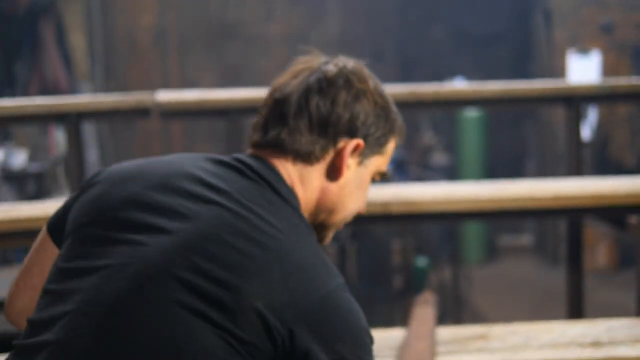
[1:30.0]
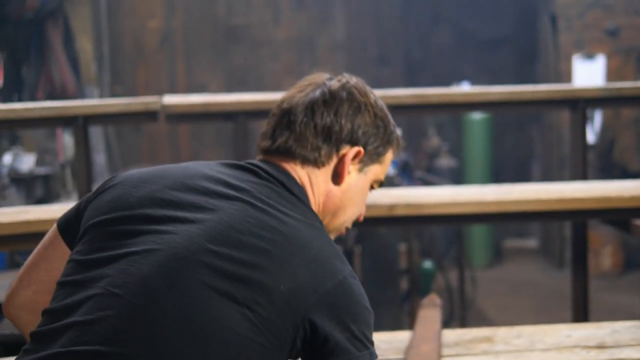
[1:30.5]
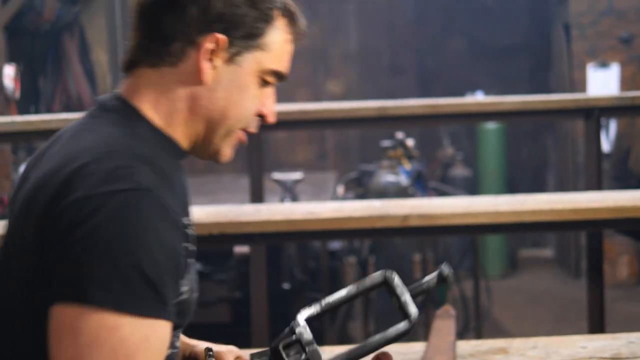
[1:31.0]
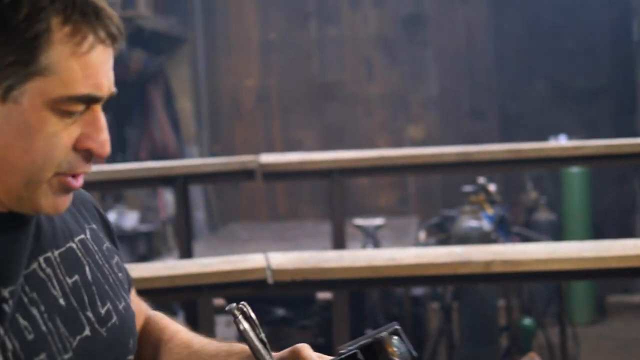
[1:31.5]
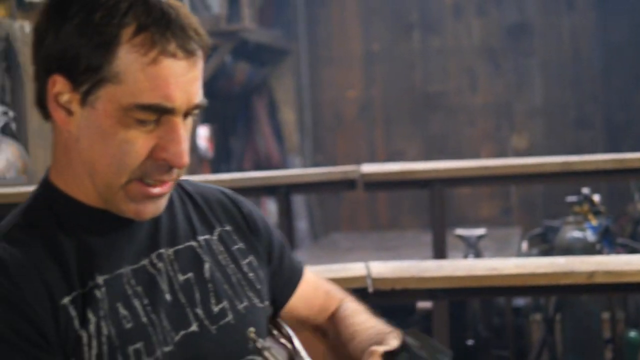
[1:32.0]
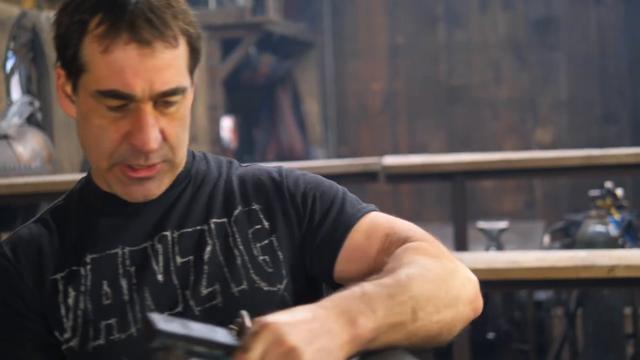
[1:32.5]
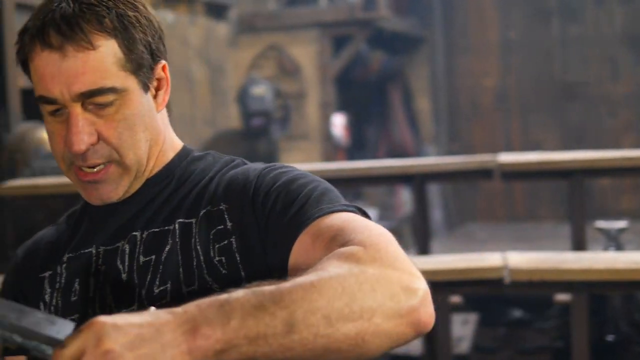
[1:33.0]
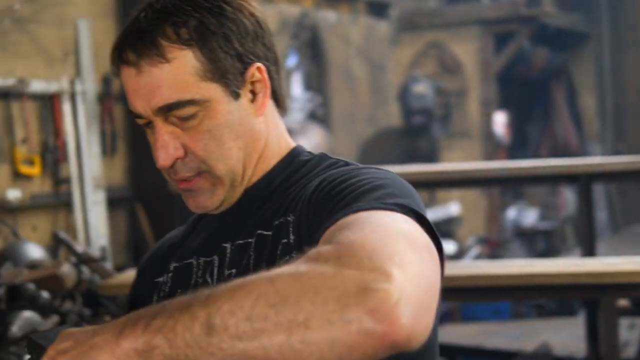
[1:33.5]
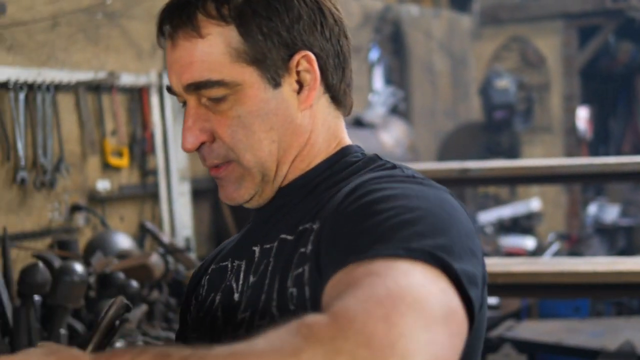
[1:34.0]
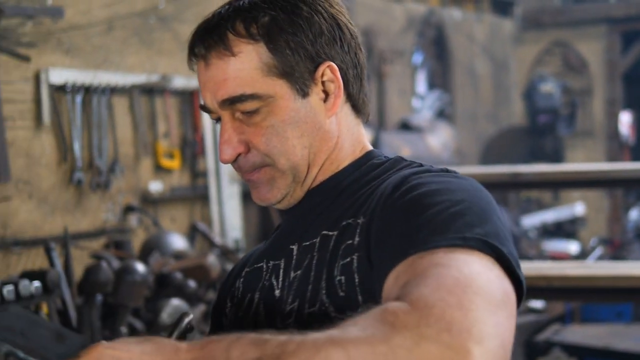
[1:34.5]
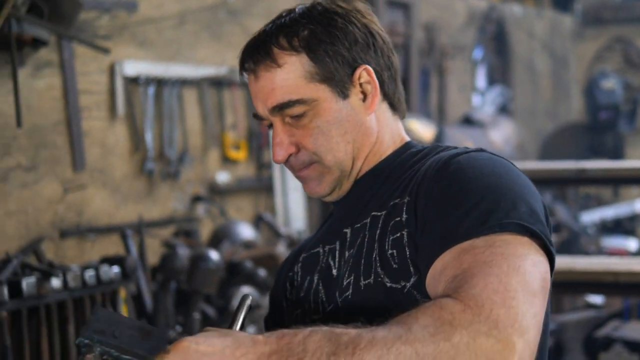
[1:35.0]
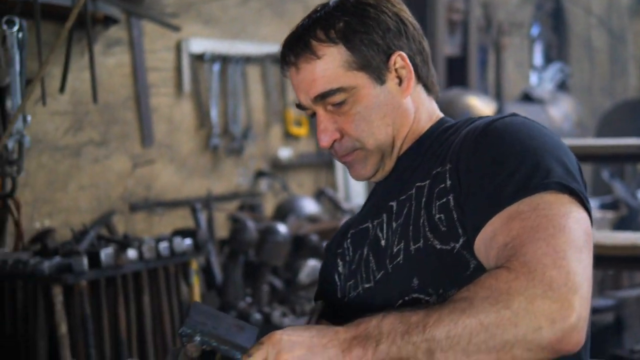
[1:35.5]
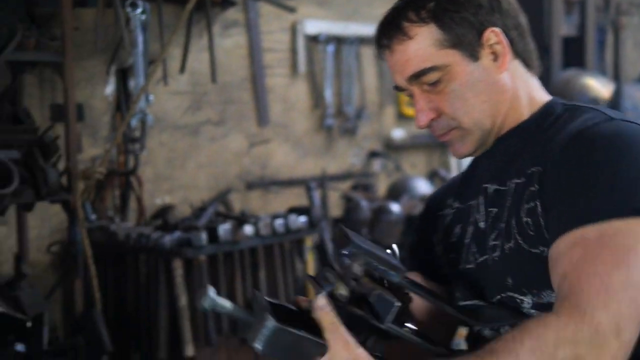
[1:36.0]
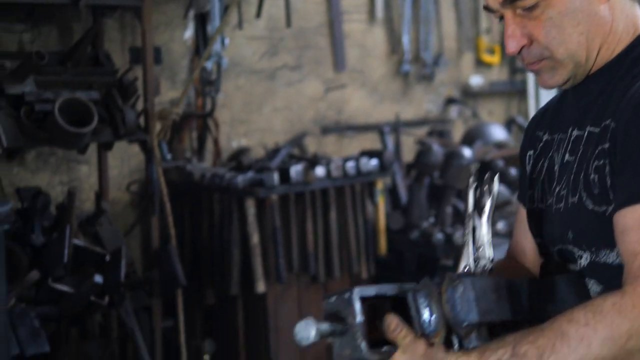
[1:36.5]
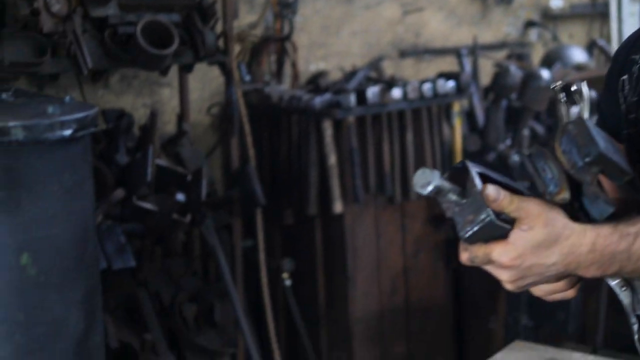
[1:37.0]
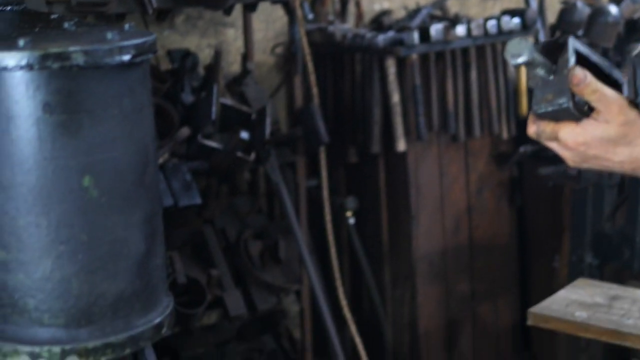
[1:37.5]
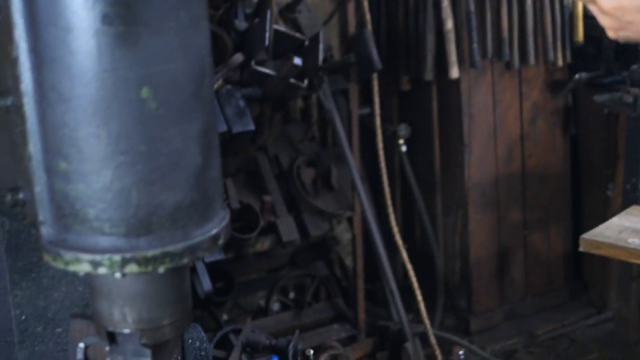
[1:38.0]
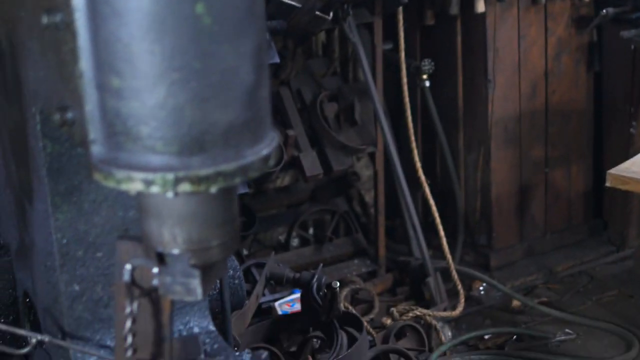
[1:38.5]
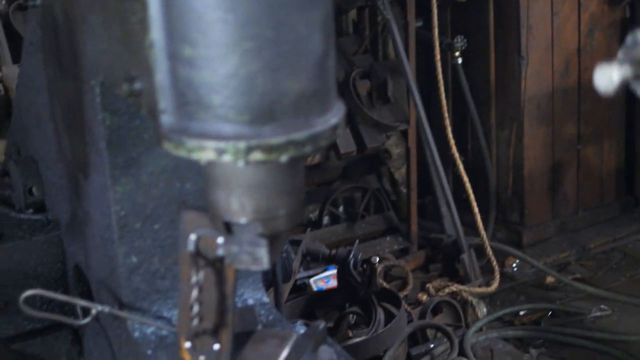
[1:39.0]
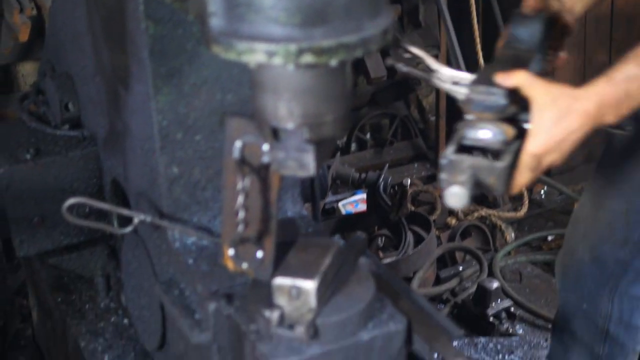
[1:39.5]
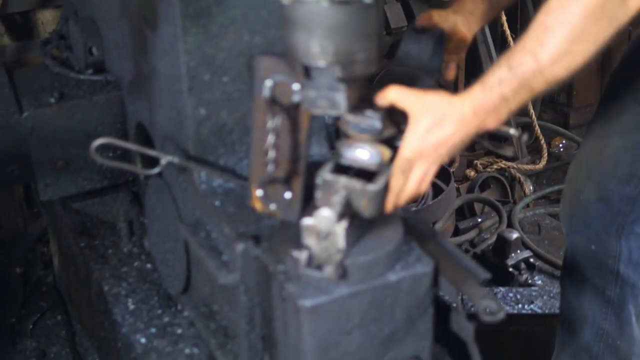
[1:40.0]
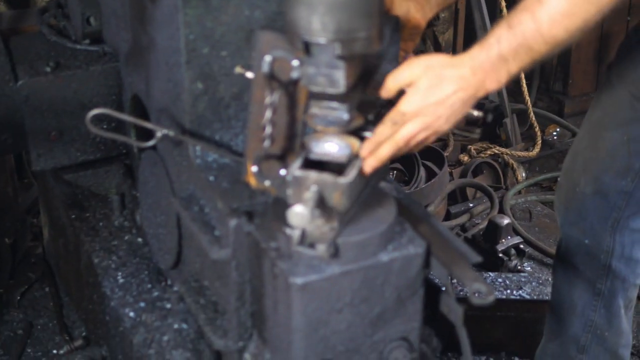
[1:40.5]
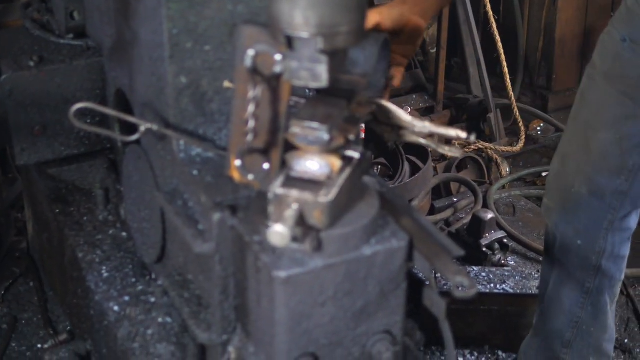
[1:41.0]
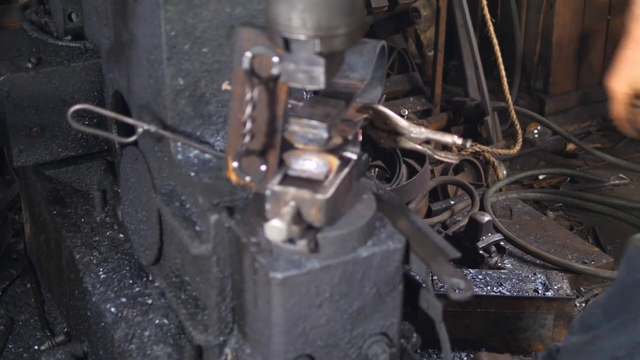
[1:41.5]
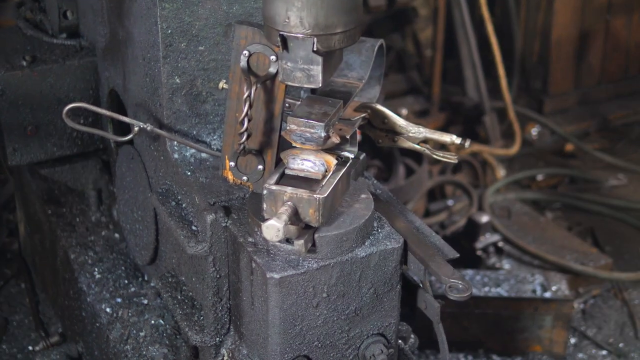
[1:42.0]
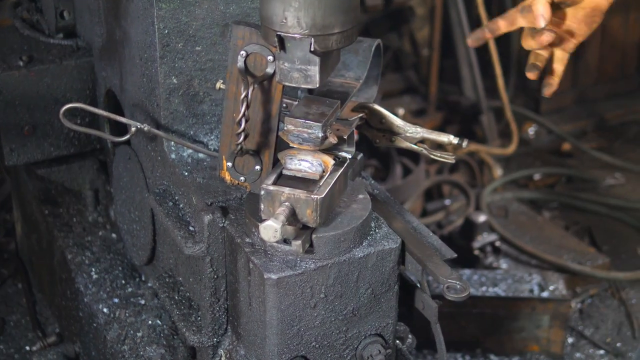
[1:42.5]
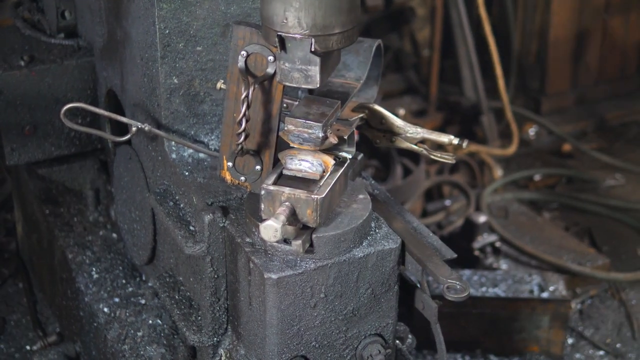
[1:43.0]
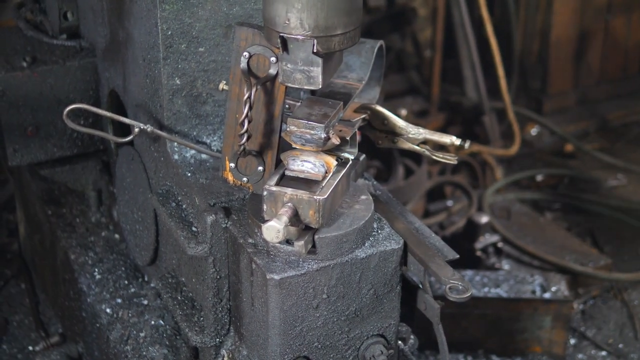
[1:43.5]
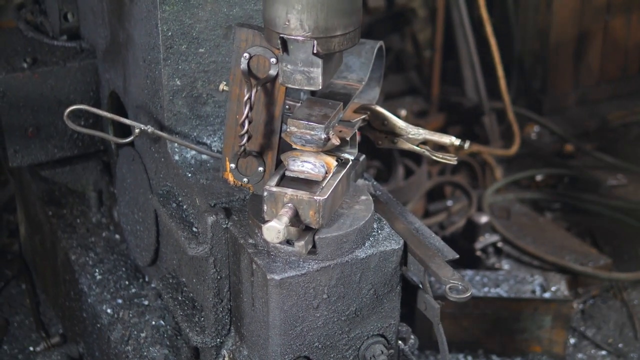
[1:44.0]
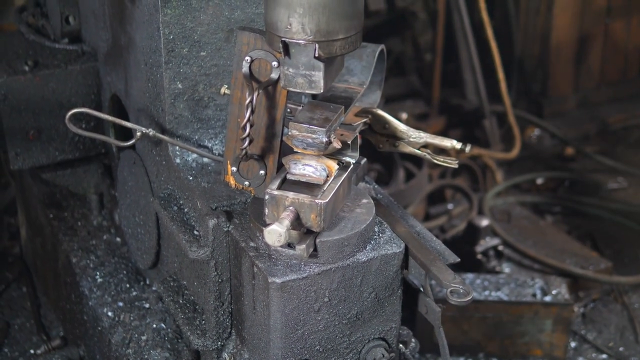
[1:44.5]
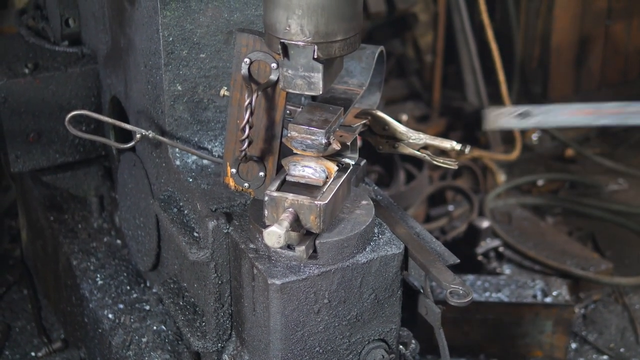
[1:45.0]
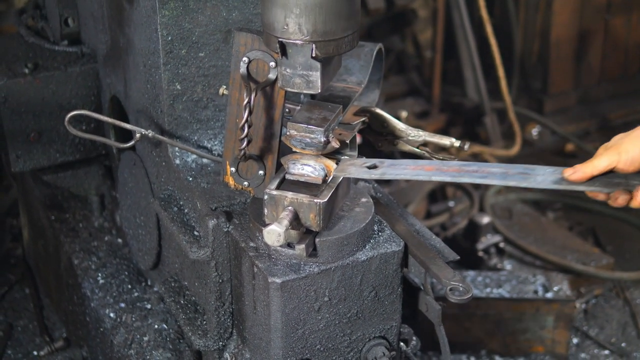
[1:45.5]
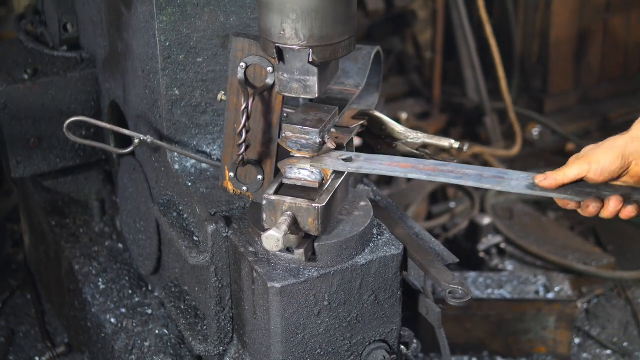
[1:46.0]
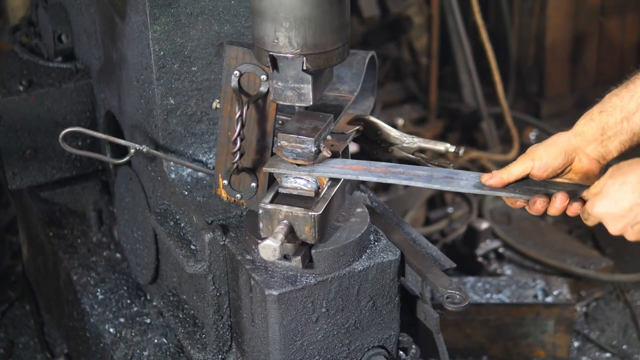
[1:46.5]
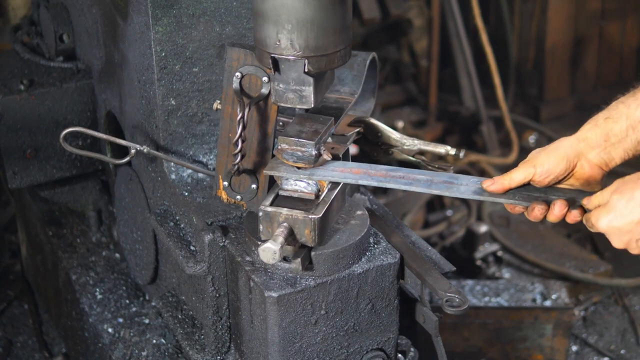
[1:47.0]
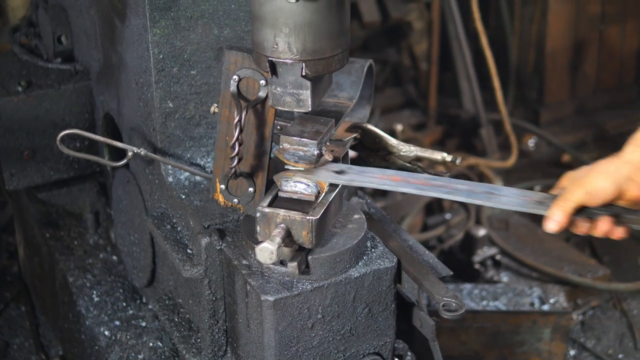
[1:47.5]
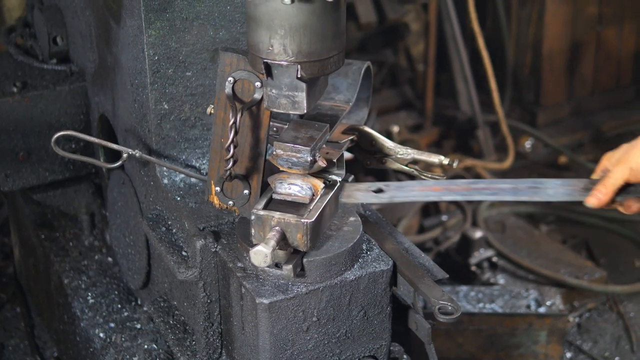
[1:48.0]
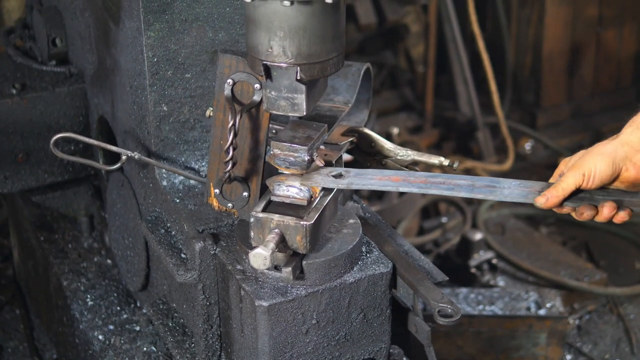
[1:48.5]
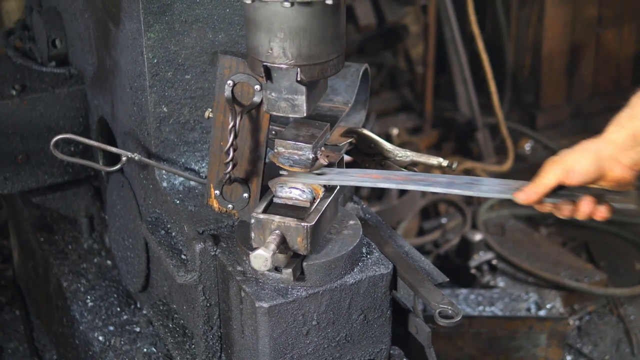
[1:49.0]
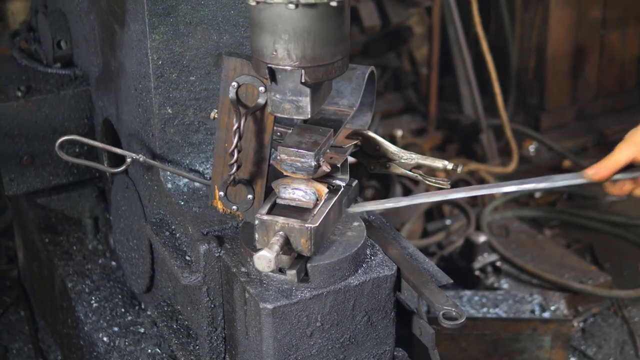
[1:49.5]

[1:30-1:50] The man picks up the same metal piece and puts the vice grips onto a huge piece of machinery that looks like it would bang things together. He puts the flat two-foot metal piece in, the end with the hole going in first, and it looks like he has flipped it over so that what is apparently a rod welded on the other side is down. To the left, something is attached to the machinery: kind of two circles of twisted metal with a handle that goes off to the left. He shows putting the metal in, but it is stopped by that add-on piece, and it looks like he is showing how he would run it through, maybe to mold it. He wears no gloves and works bare-handed. Behind the machine are all kinds of things, including plugs and metal.